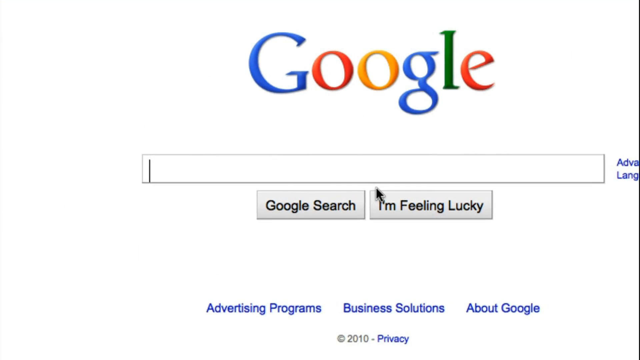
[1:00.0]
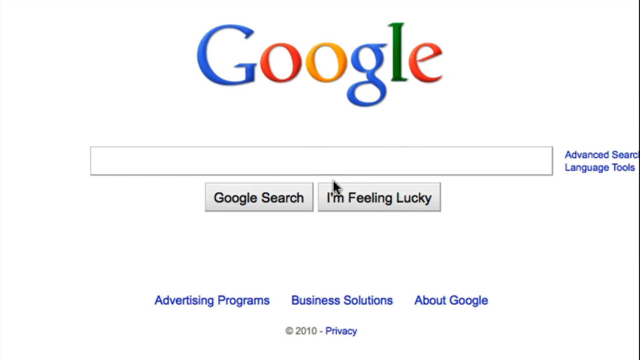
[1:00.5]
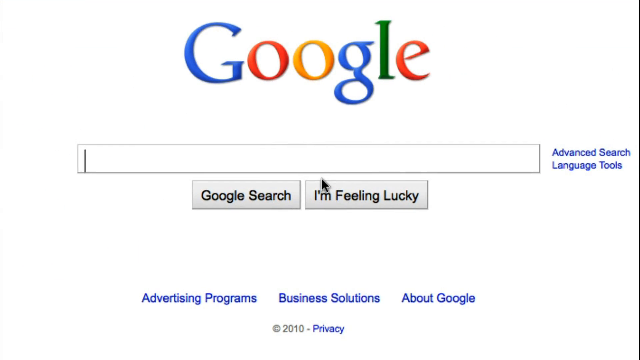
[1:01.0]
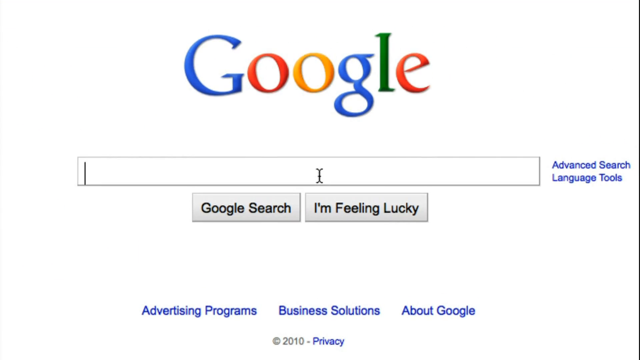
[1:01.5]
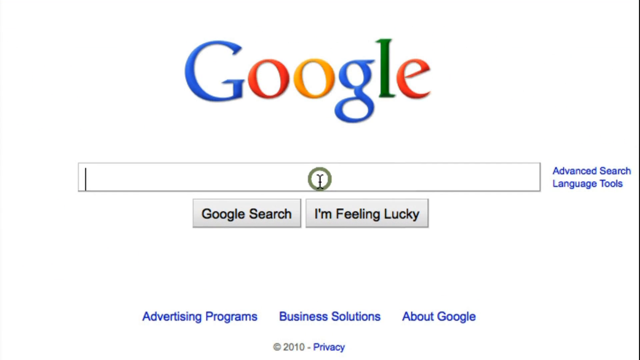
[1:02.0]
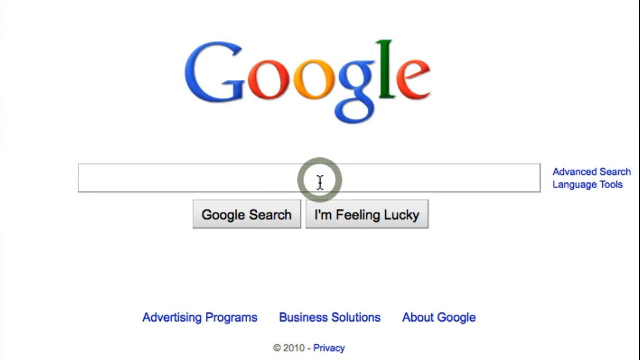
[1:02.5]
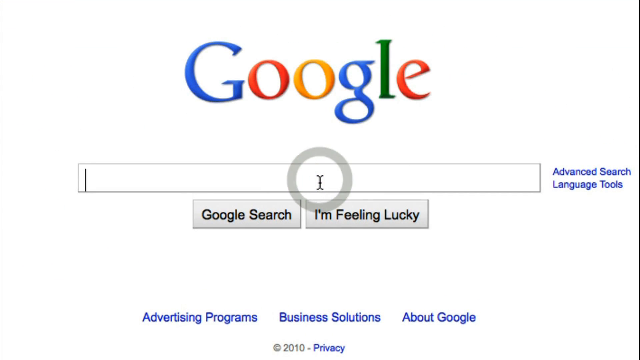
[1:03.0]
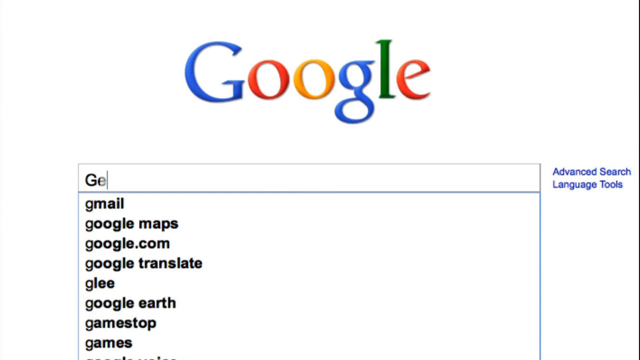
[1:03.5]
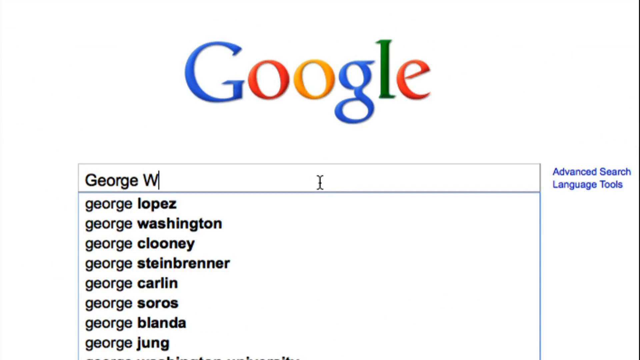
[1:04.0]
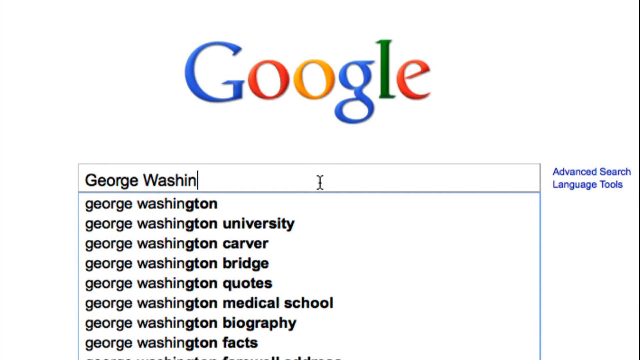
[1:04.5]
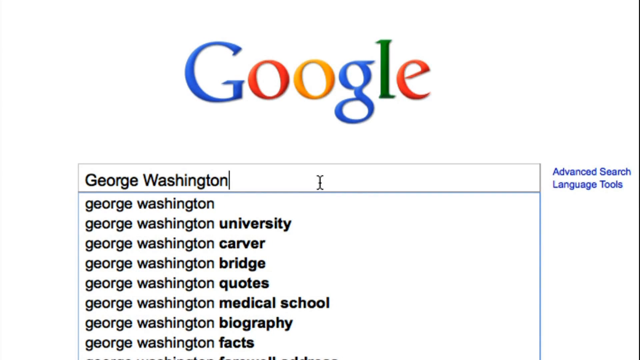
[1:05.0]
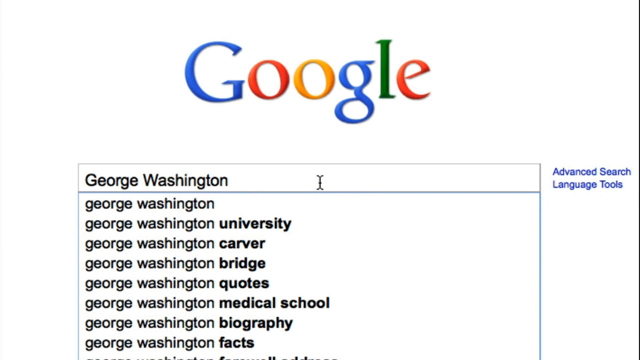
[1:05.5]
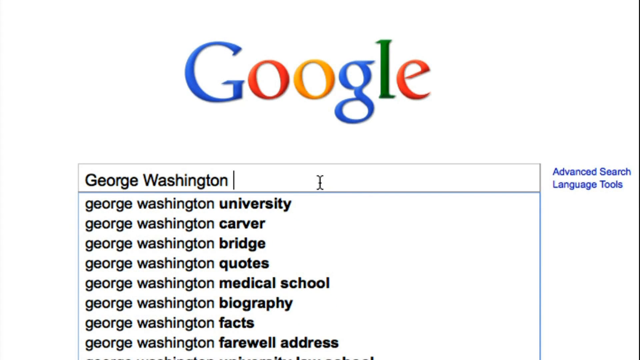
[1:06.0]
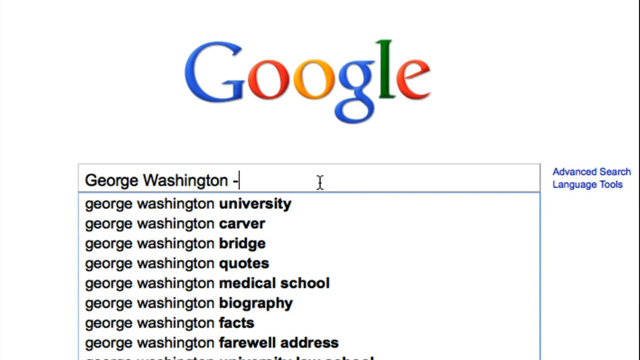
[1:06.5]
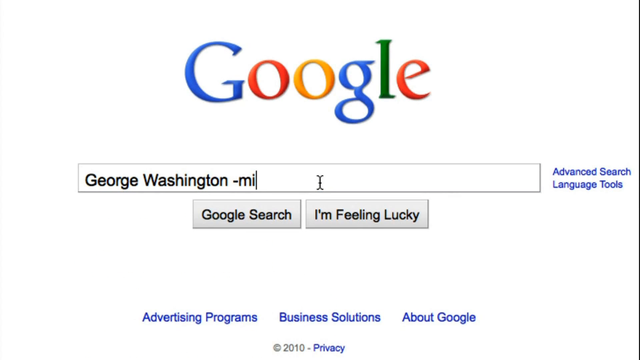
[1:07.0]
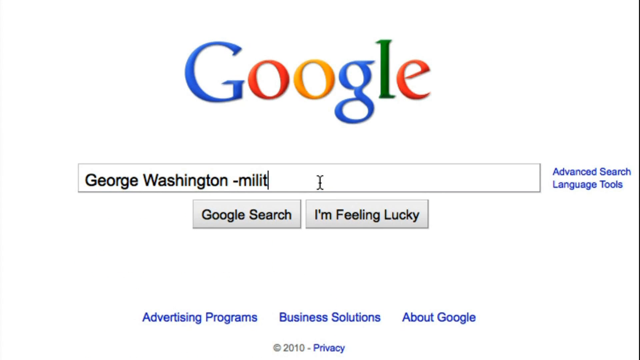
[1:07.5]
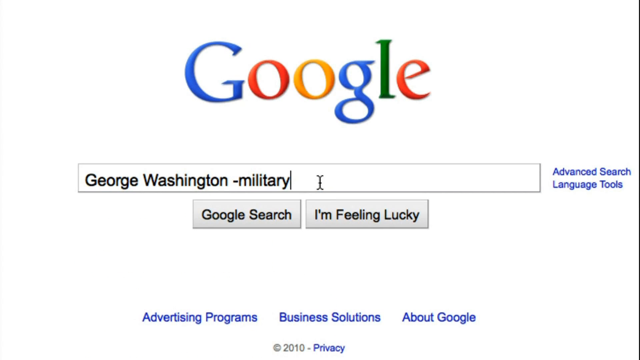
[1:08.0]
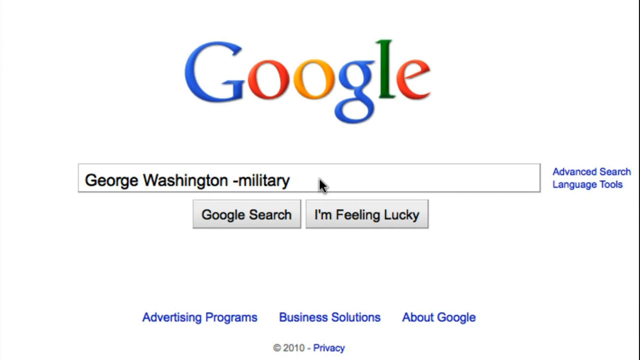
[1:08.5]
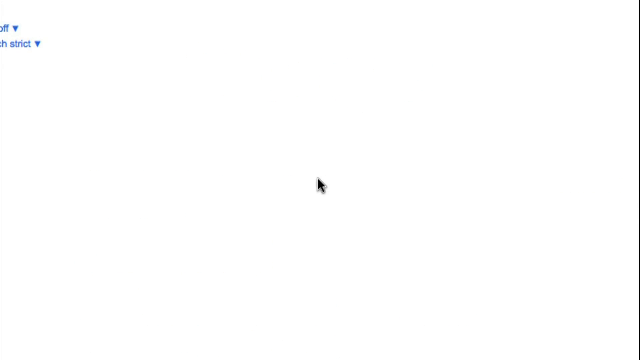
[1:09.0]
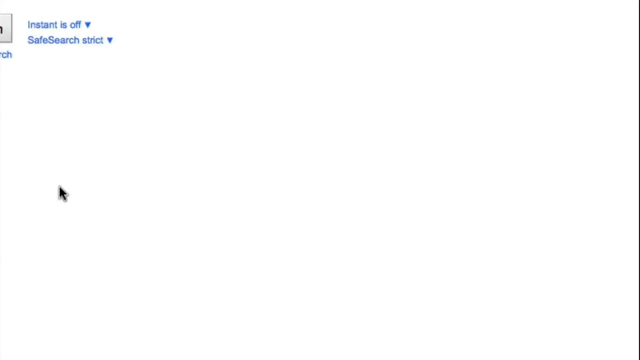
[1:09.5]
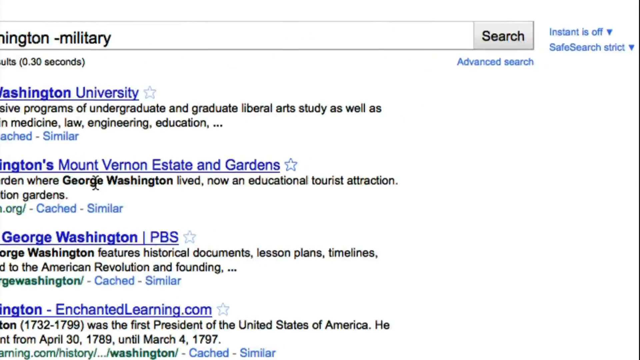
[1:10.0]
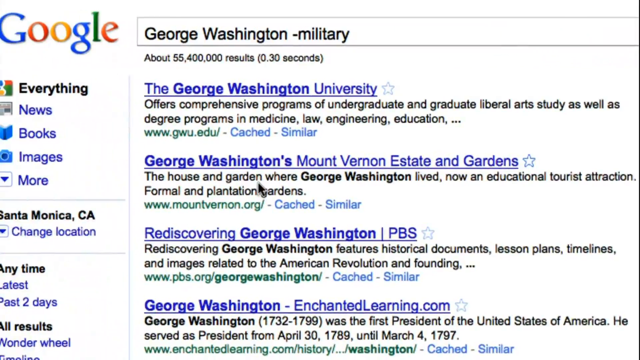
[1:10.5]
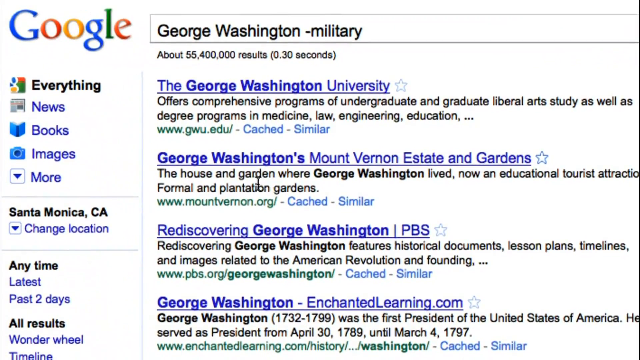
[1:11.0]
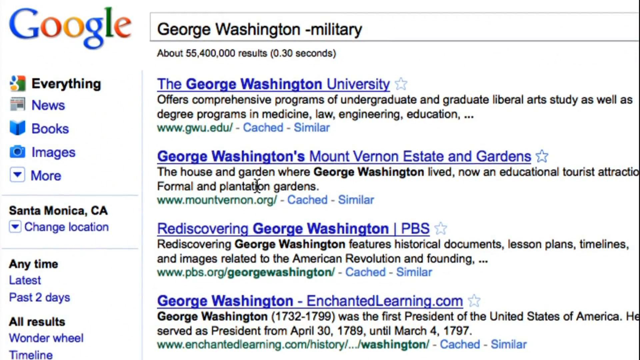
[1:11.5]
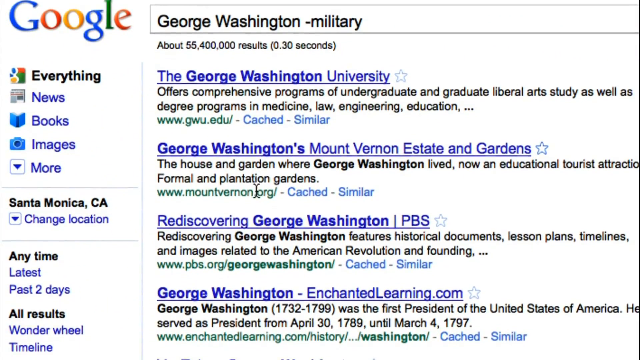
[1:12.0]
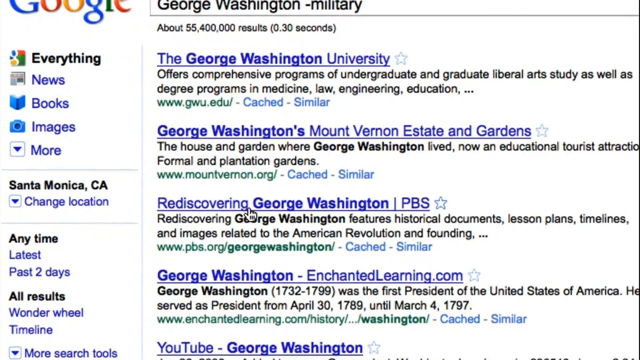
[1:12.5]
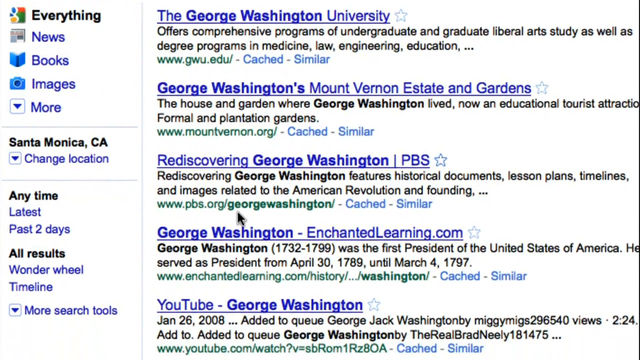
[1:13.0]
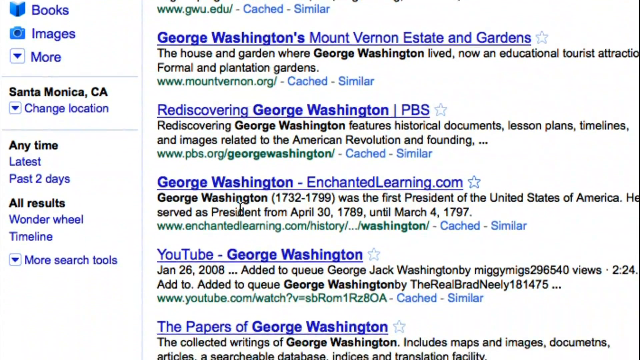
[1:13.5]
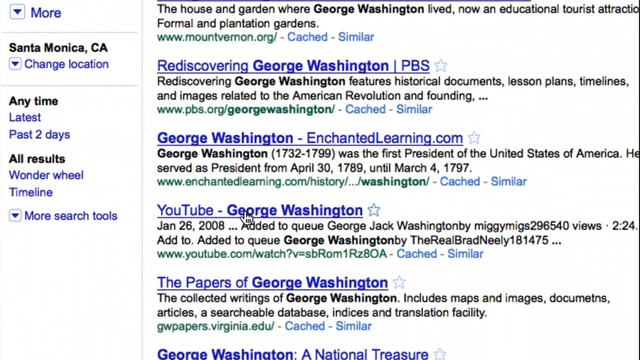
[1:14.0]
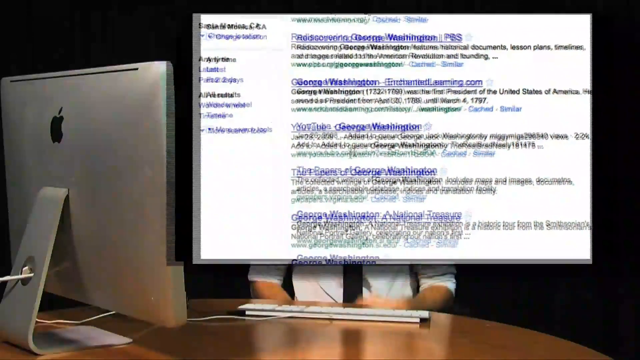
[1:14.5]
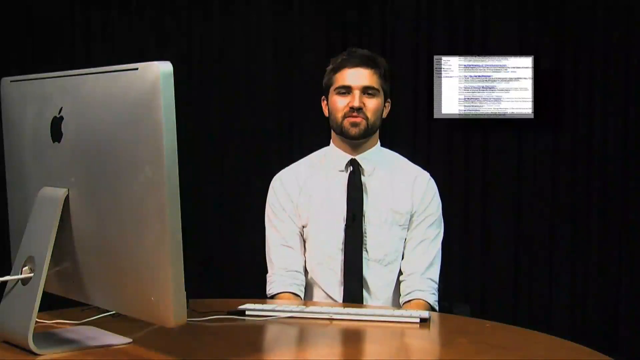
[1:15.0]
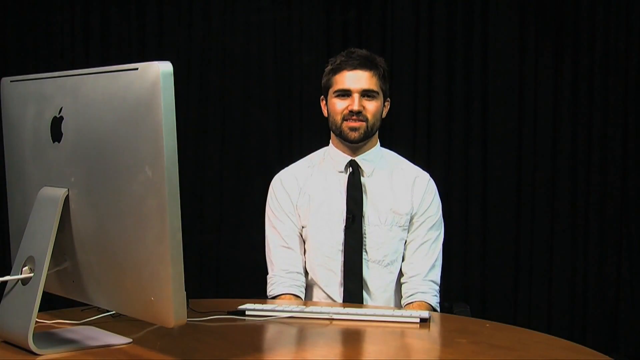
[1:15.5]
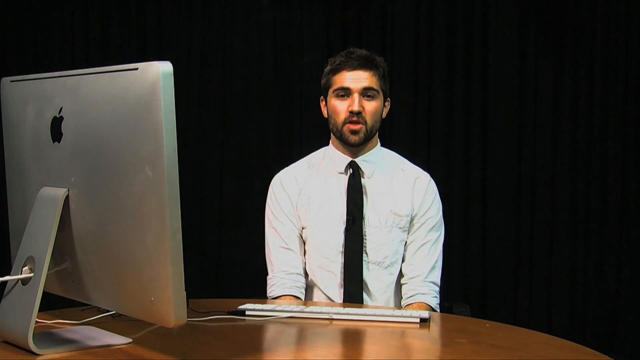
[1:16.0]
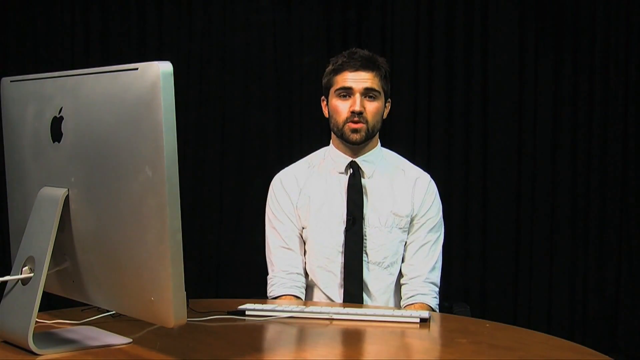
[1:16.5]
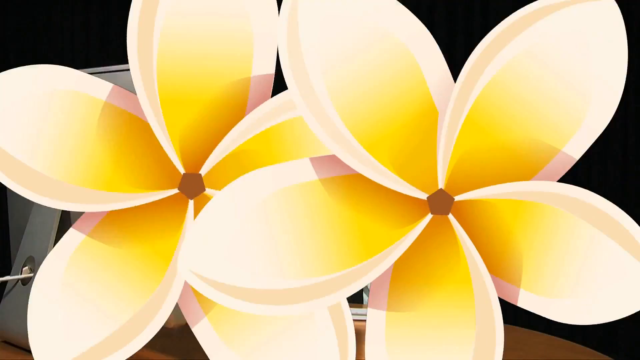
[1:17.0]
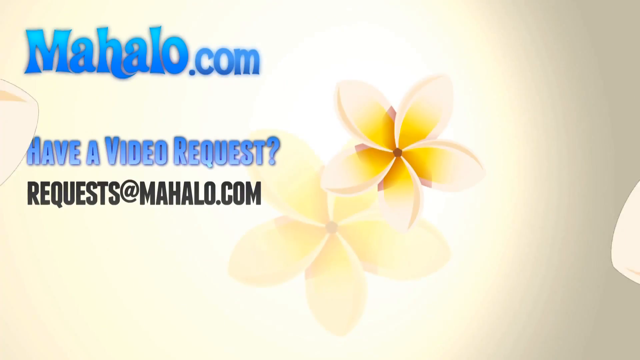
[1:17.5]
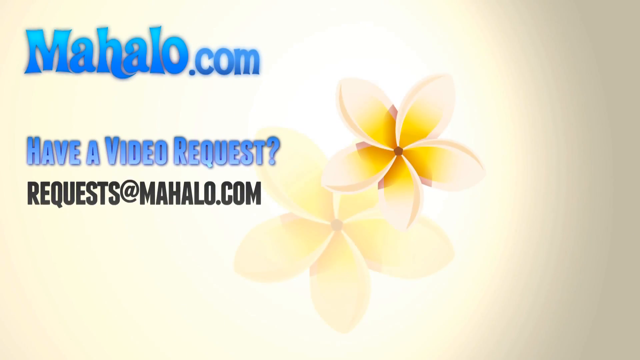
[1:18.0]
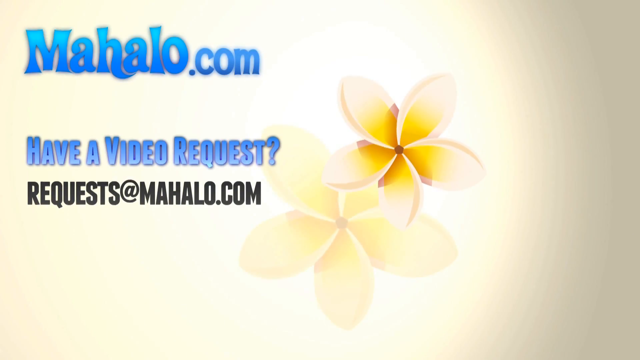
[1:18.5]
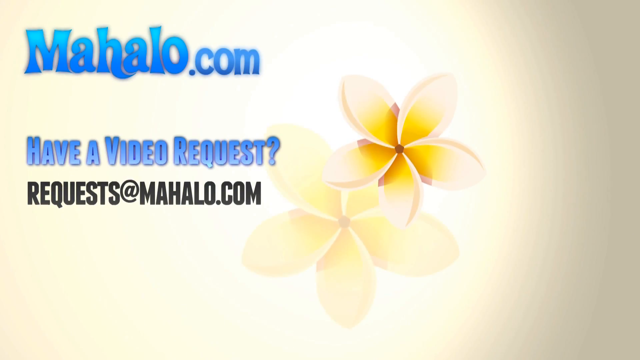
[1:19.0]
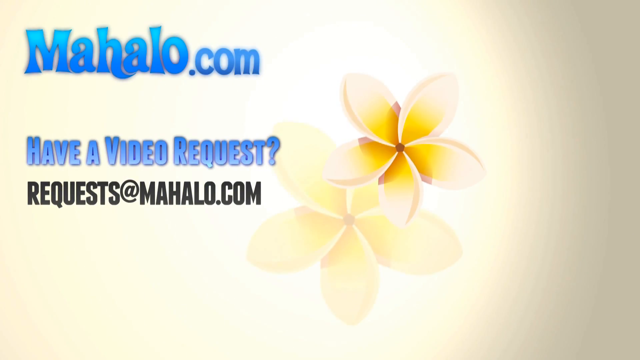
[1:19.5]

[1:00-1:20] A desktop computer screen shows the Google search engine page with the long rectangular search box empty and the cursor blinking in its left corner. The mouse pointer clicks in the center of the search box, and a grey circle radiates from the pointer as the click takes place. The search phrase George Washington minus military is entered, and the results appear, covering all sorts of results for George Washington, about 55,400,000 results in 0.30 seconds. The mouse pointer scrolls down the page. The Google search page then disappears in a screen effect into the upper right corner, revealing a man seated at his Apple desktop monitor, dressed in a white shirt and black tie, with a trimmed beard and mustache. The man is speaking, and the video ends with an effect of two yellow lotus flowers.